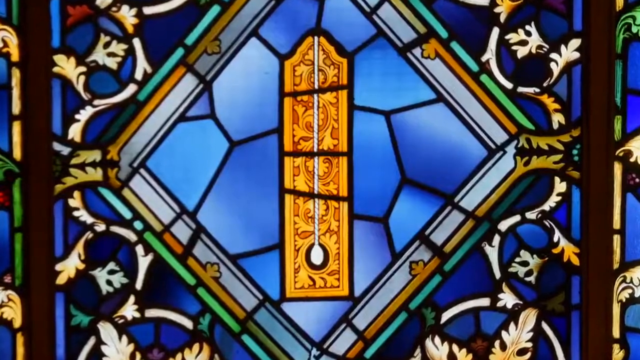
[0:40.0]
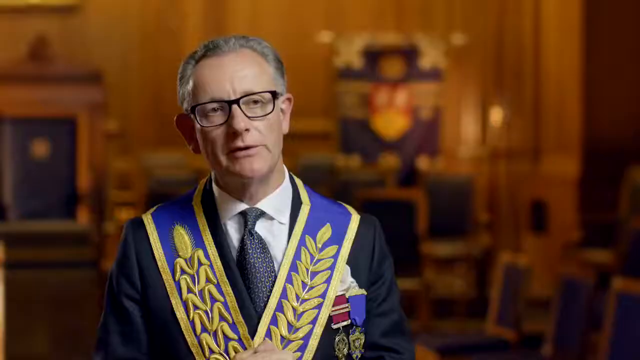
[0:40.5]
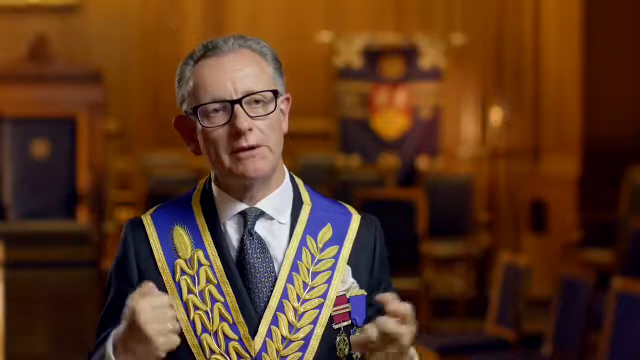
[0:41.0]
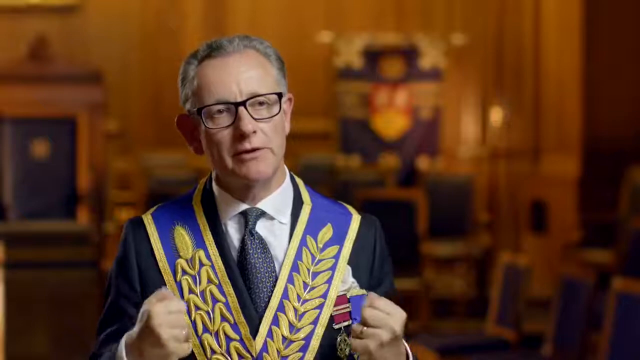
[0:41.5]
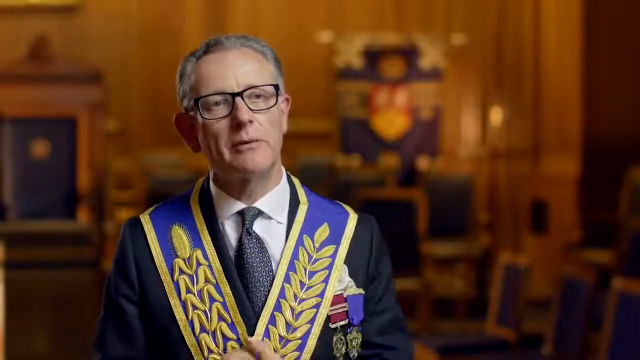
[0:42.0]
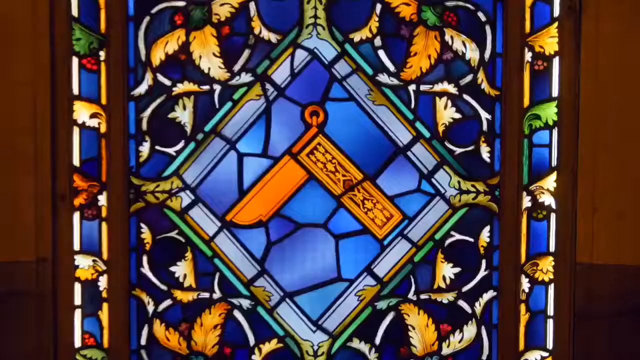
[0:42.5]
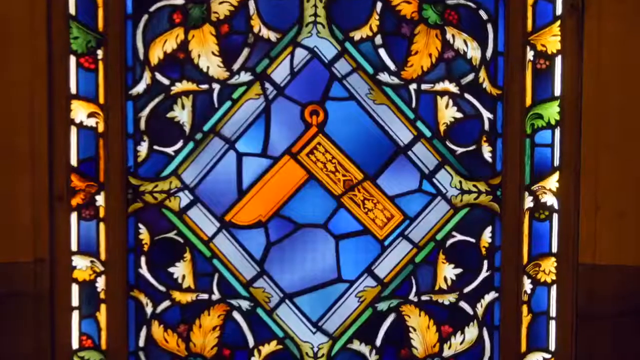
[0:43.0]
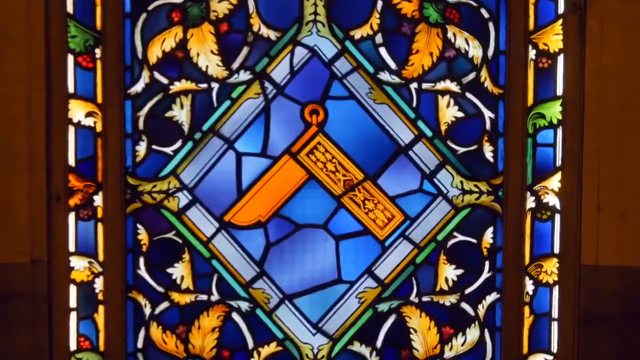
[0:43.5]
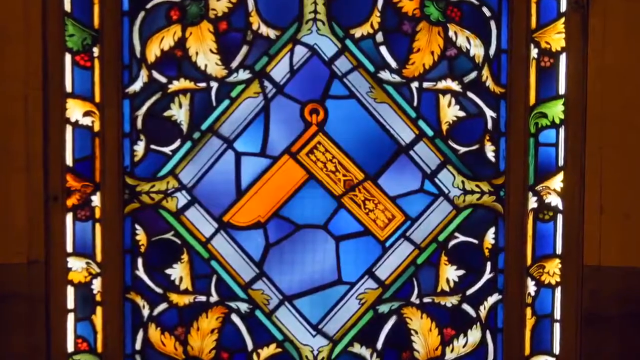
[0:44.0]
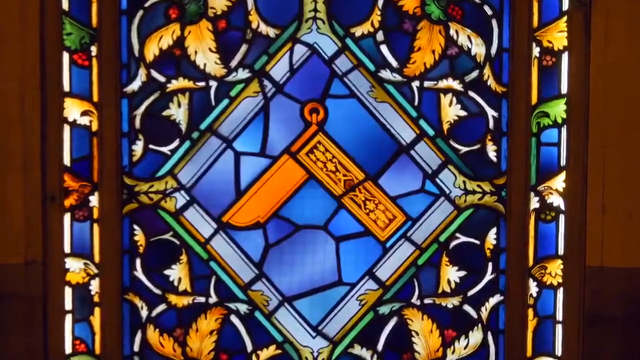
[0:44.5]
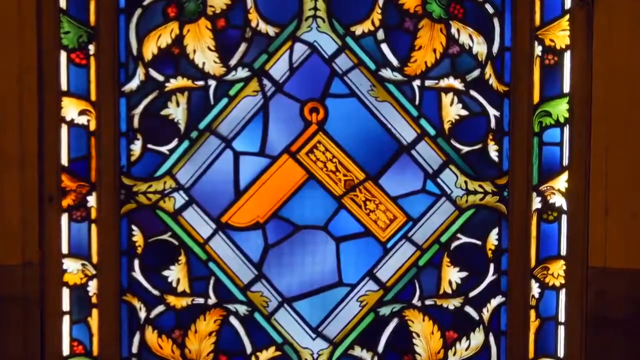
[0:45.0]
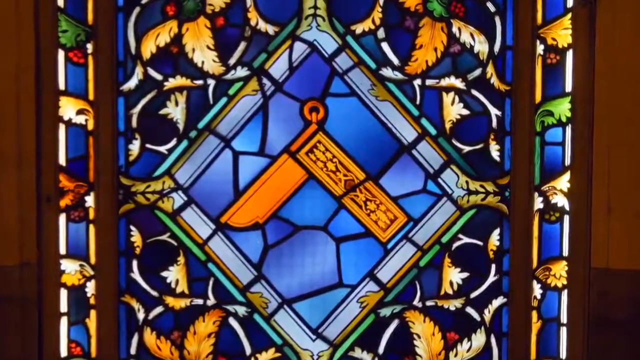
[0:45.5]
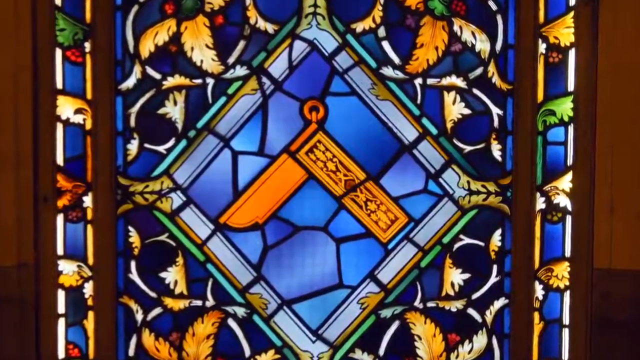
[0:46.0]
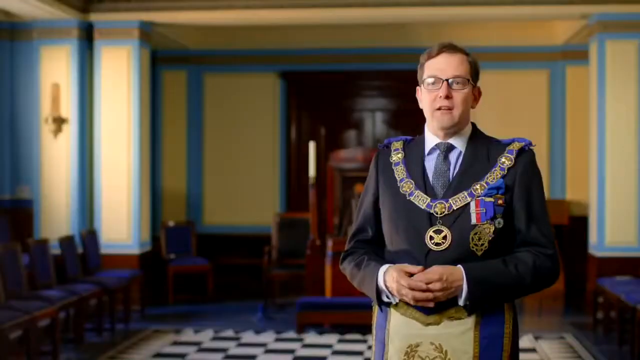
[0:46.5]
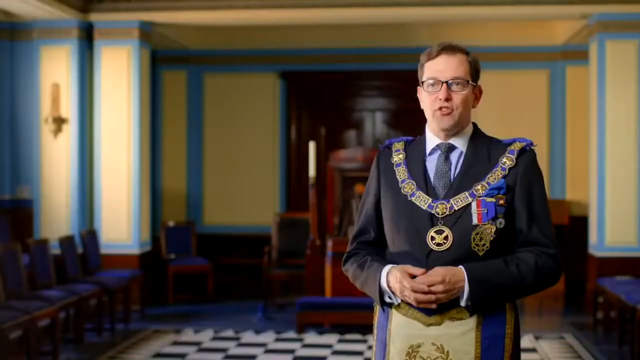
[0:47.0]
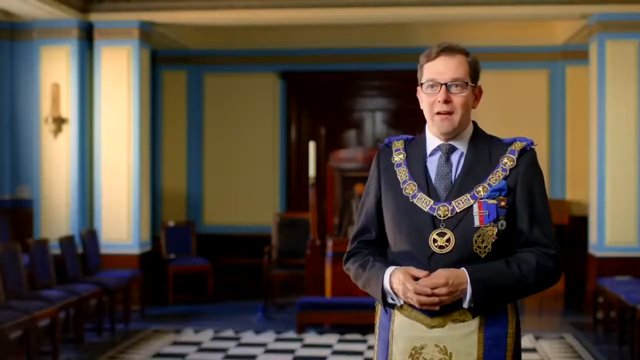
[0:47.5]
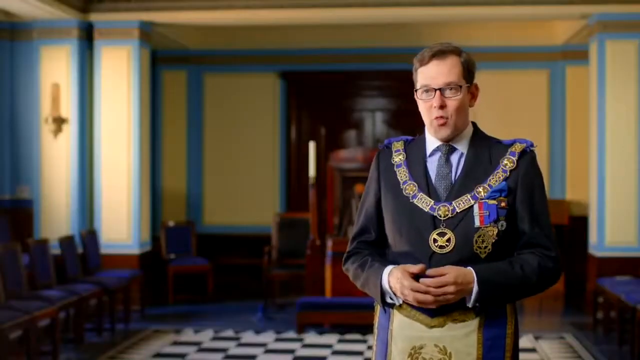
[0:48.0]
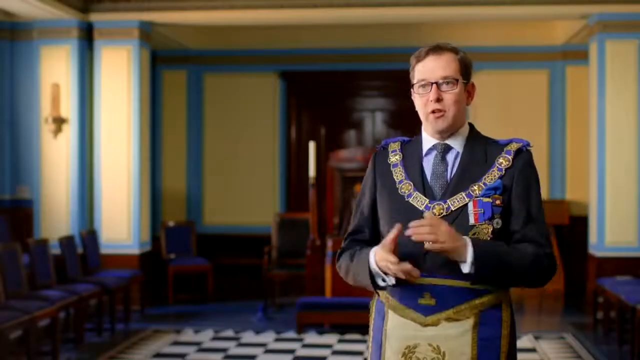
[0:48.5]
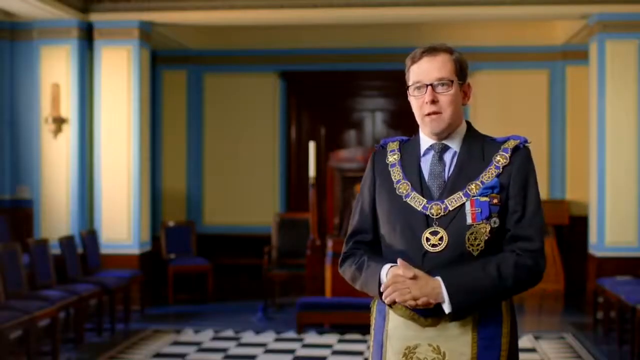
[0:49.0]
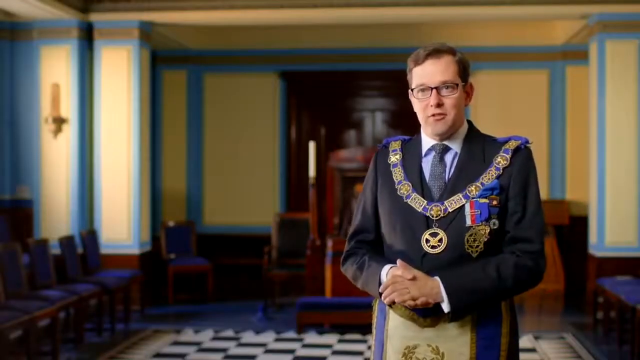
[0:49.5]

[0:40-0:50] Stained glass is shown, with different files in the glass. A couple of men are speaking, wearing some sort of sash showing a badge, maybe indicating their rank; they may be priests or pastors, probably high-ranking ministers or pastors of this church, which looks like a hall or a temple. Special blue stained glass shows files in the middle of a diamond, as symbols. One stained glass has what looks like a gold-plated thermometer etched in its middle.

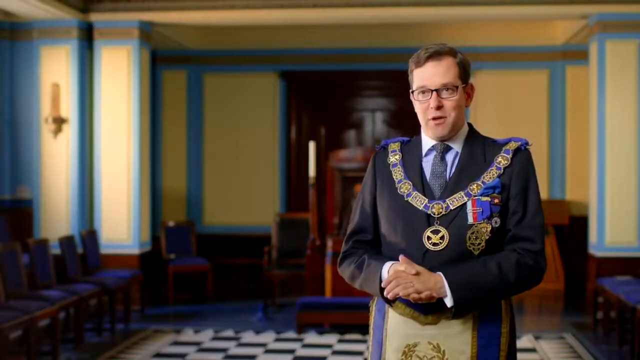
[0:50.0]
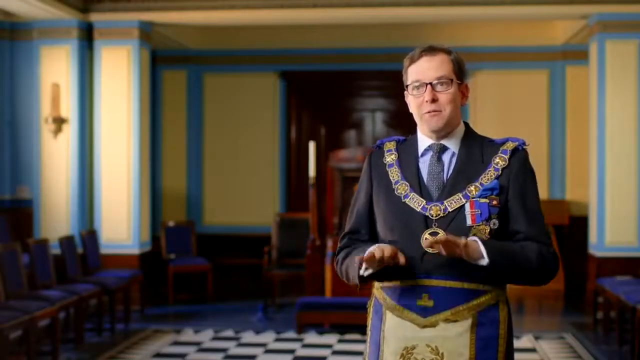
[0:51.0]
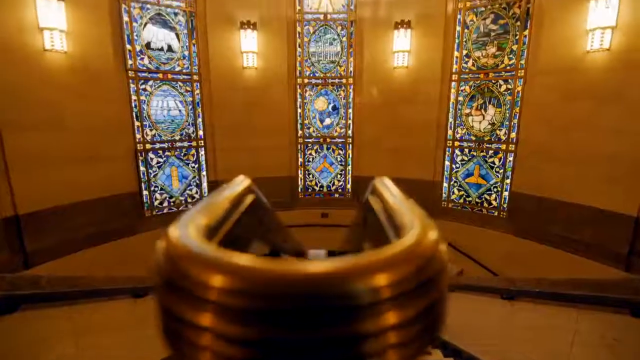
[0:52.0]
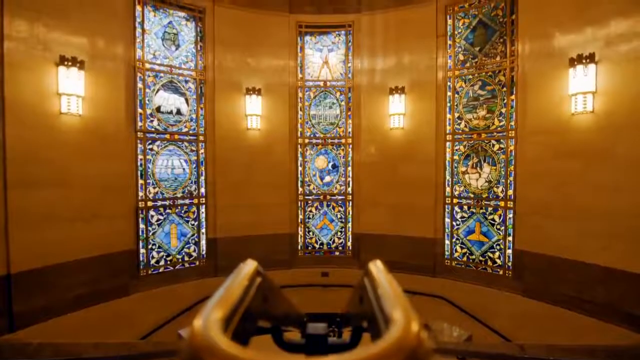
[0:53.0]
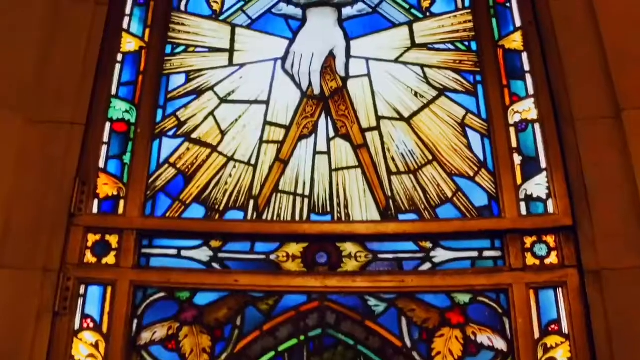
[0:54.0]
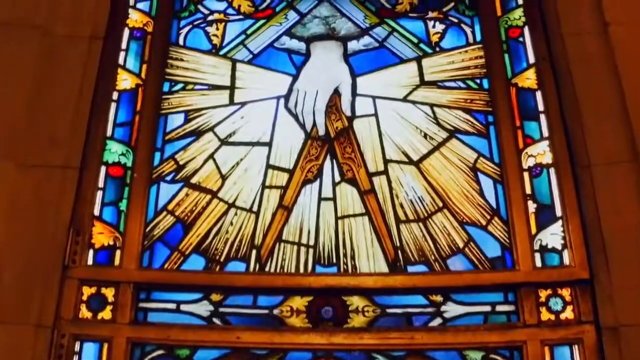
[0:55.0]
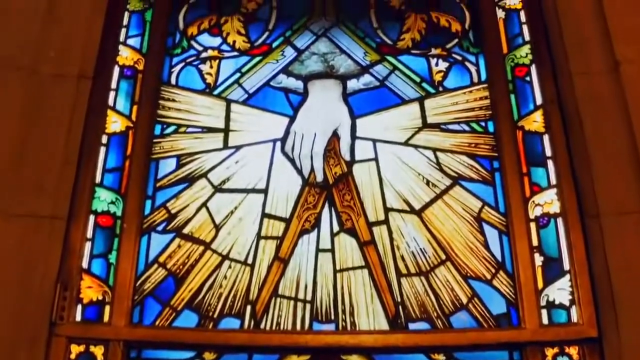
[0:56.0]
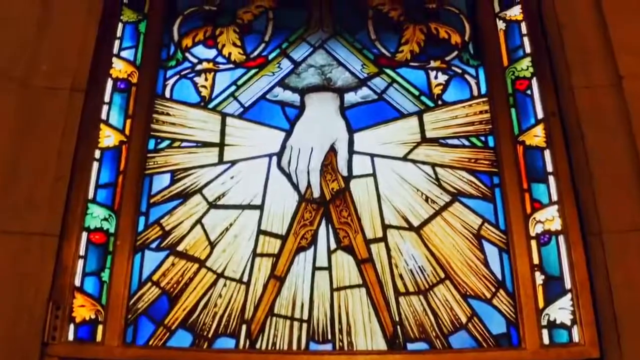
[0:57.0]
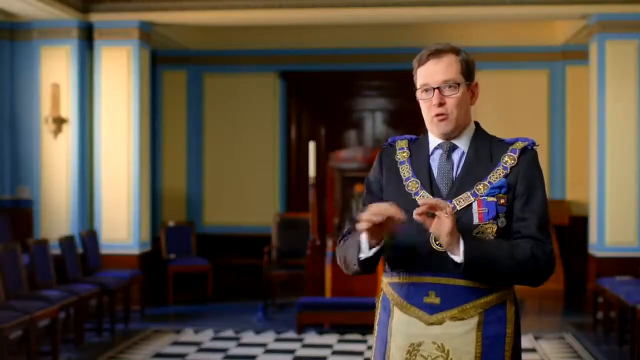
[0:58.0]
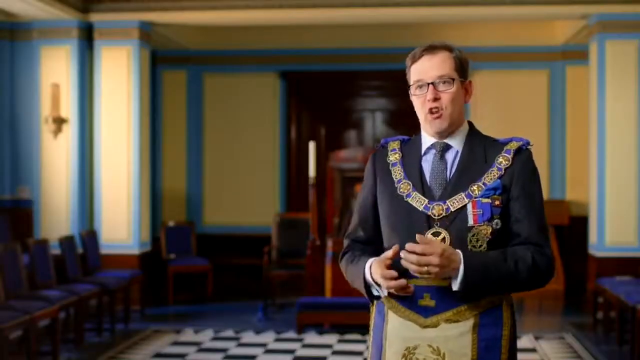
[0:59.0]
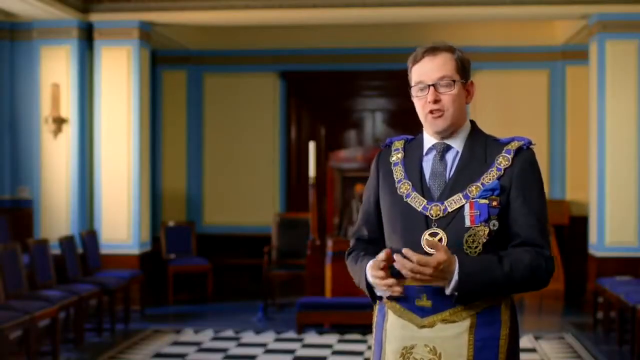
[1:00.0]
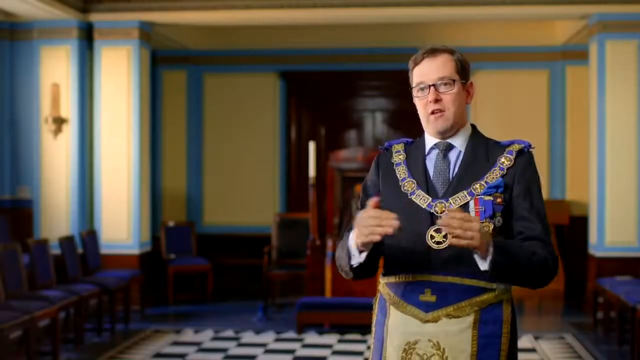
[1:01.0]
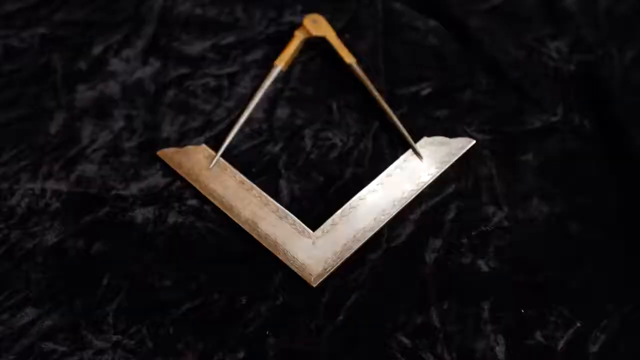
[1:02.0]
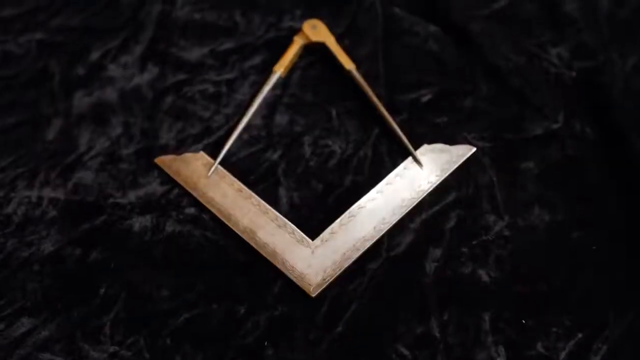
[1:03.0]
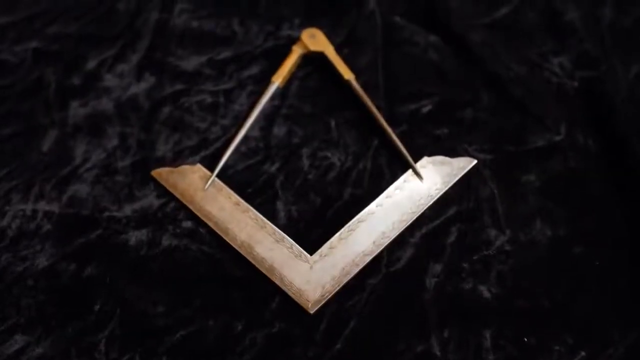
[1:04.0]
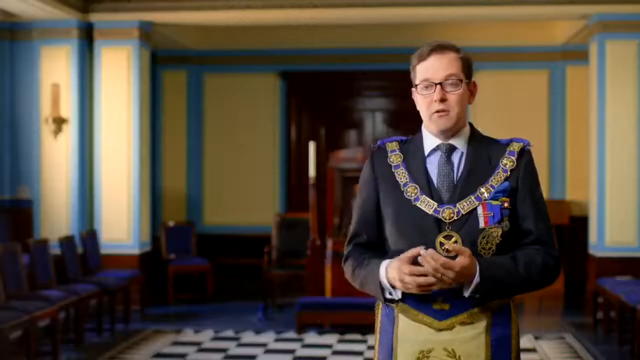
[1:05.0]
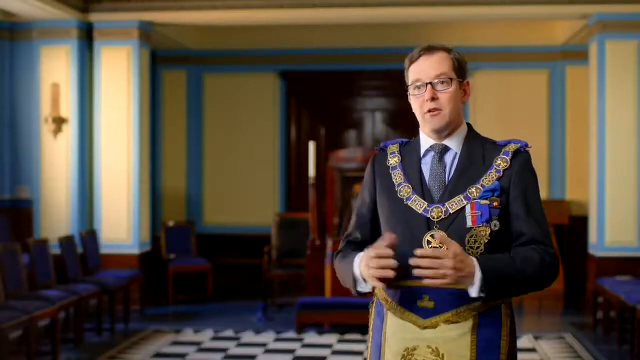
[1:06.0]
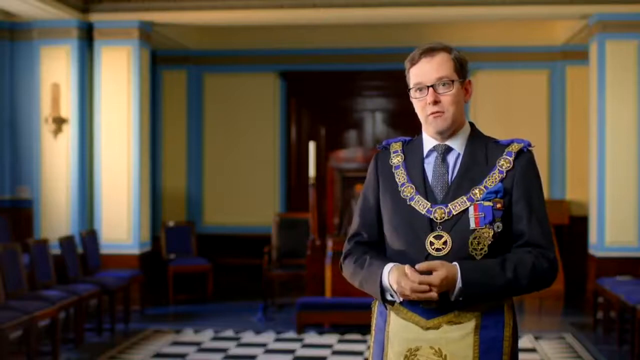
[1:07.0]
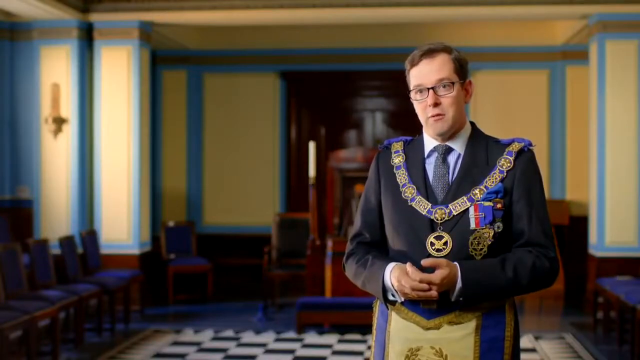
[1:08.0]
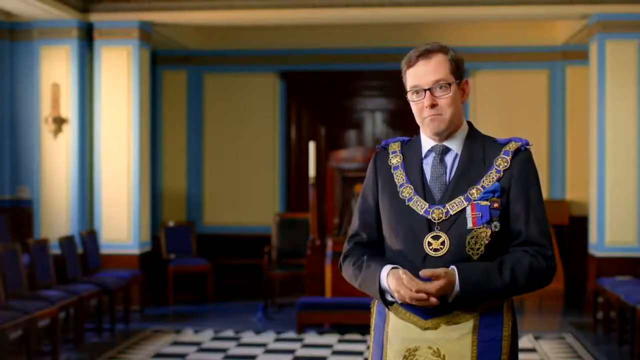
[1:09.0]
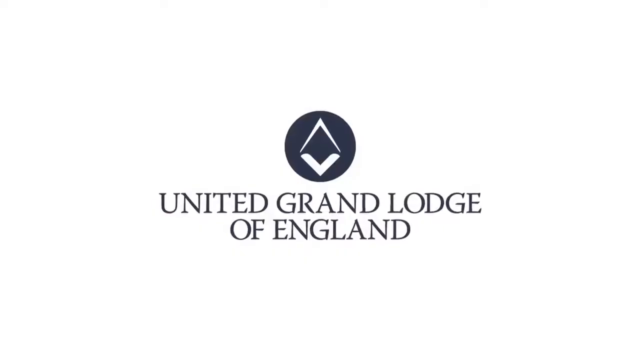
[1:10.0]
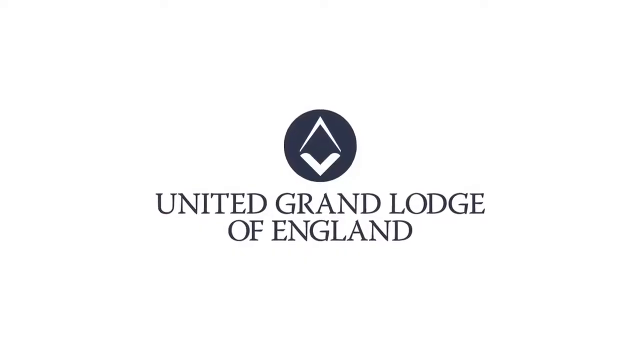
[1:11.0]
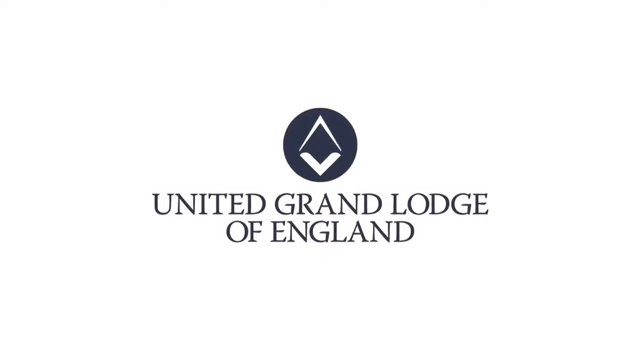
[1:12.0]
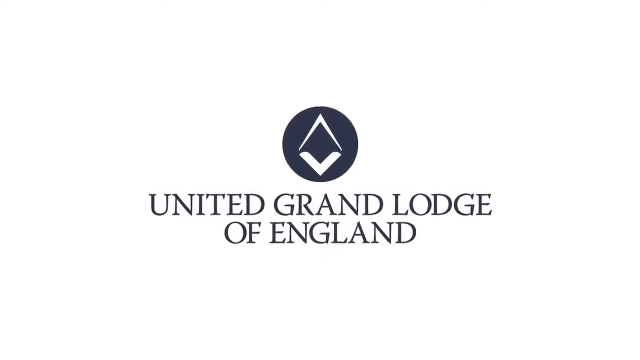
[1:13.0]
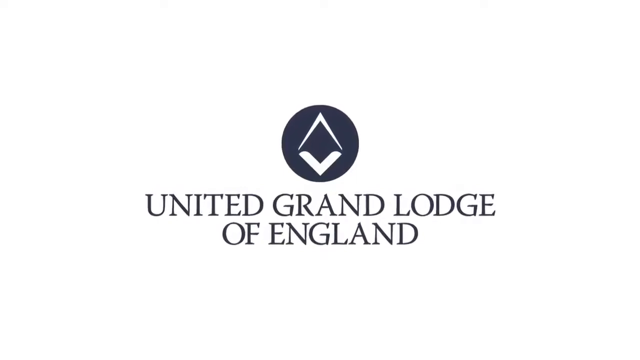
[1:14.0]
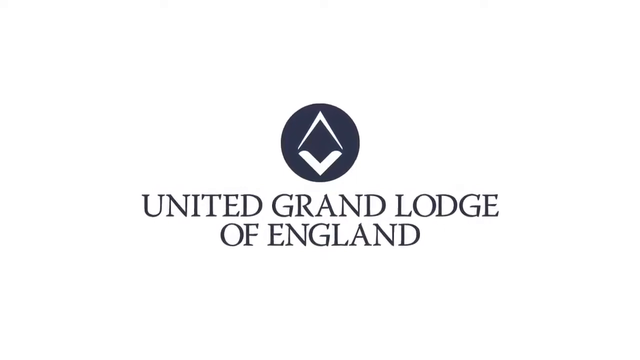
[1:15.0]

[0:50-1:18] Another man appears; there are two men. He wears something like a brooch or necklace over his suit and has different medals on his pocket, apparently marking him as a highly ranked member. Different features of the building are shown, especially the stained glass. There are three different types of glass, and the third is shown in the middle, with a sign and a file making a diamond. At the end, the emblem and sign of the United Grand Lodge of England appear. The blue stained glass shows the same symbol that is on the logo. The two men look like a director or the head of the lodge, with neckwear of badges and a lot of medals on their chests. They are being interviewed.